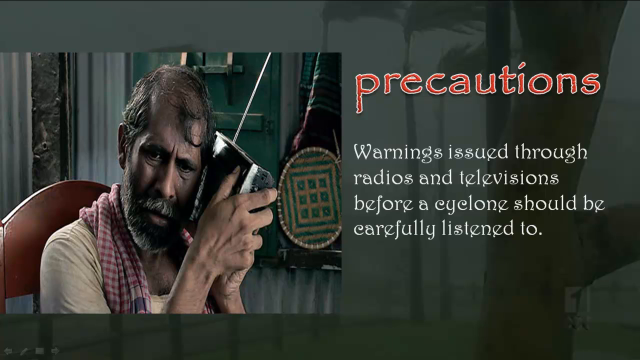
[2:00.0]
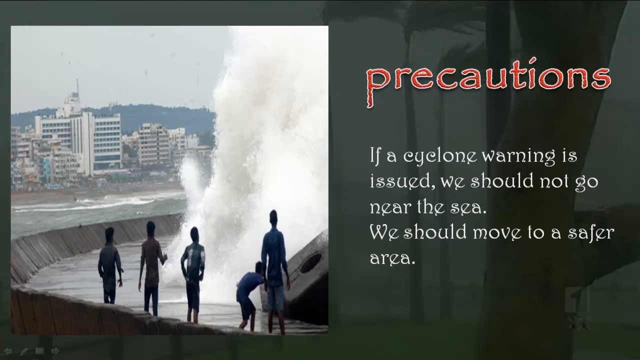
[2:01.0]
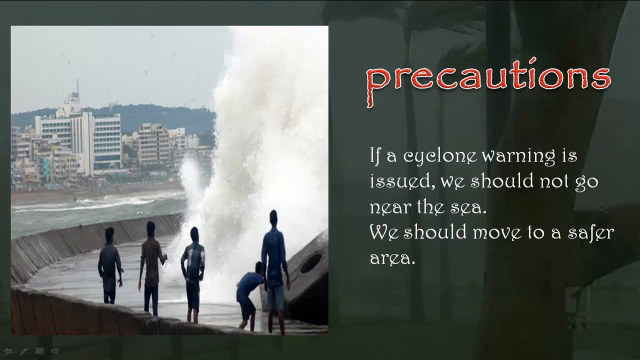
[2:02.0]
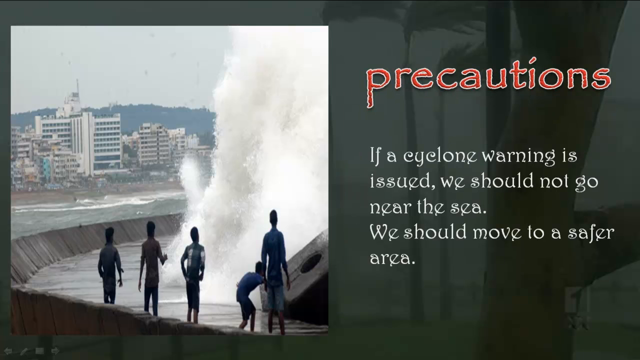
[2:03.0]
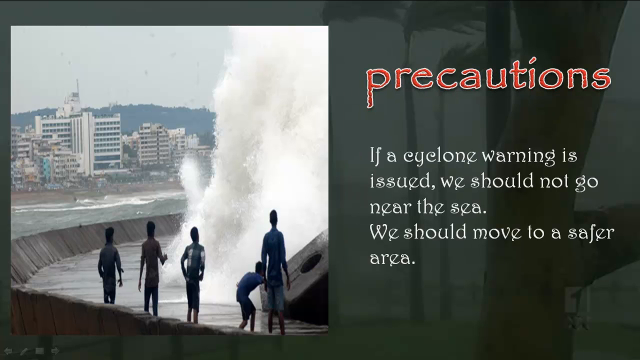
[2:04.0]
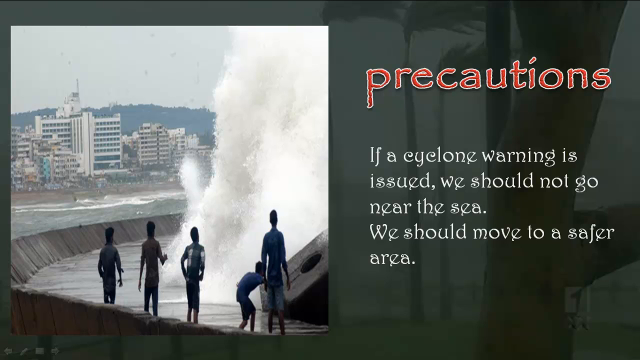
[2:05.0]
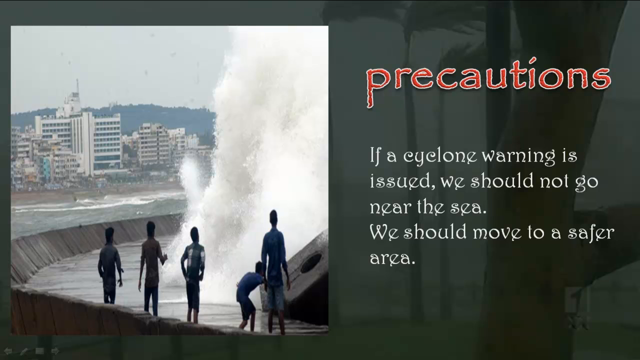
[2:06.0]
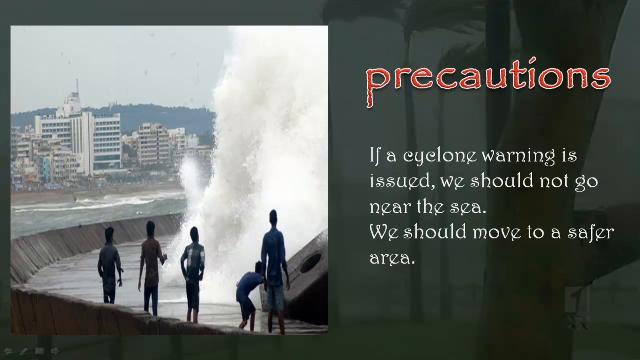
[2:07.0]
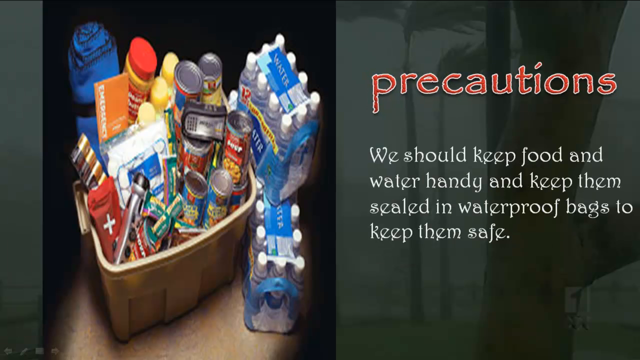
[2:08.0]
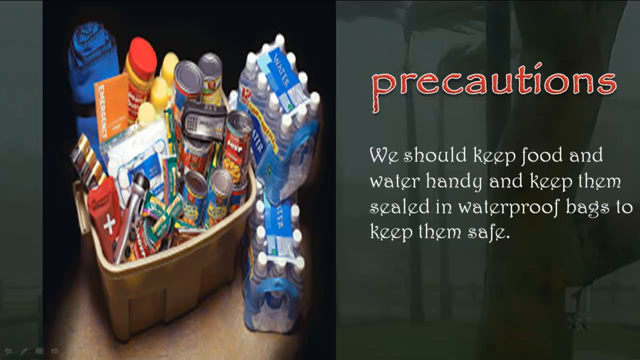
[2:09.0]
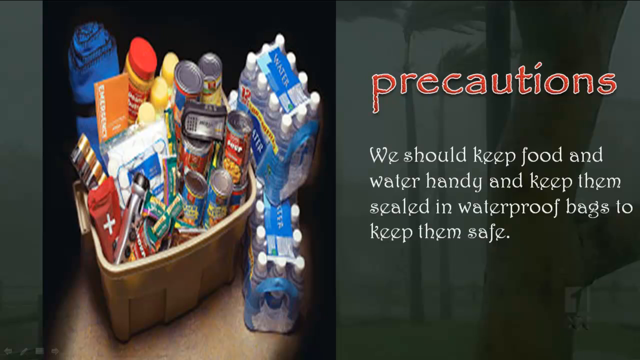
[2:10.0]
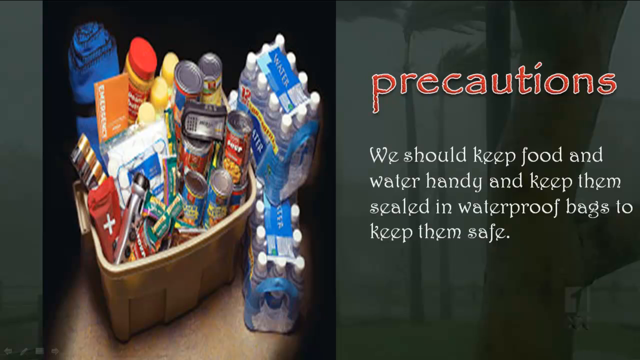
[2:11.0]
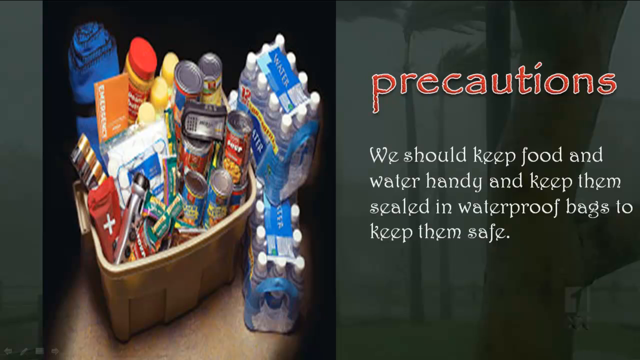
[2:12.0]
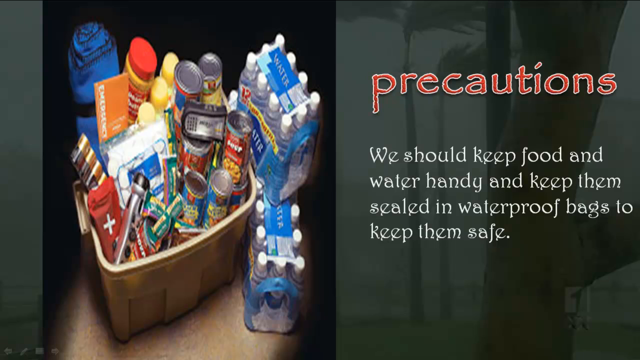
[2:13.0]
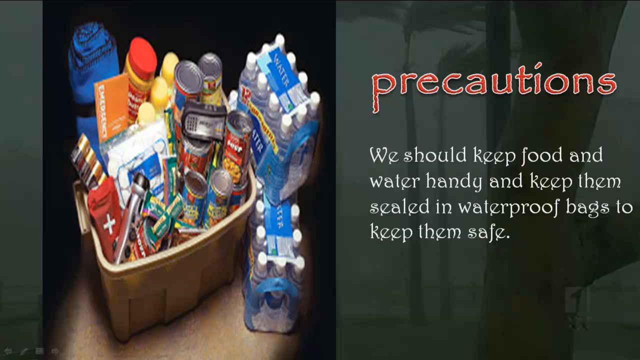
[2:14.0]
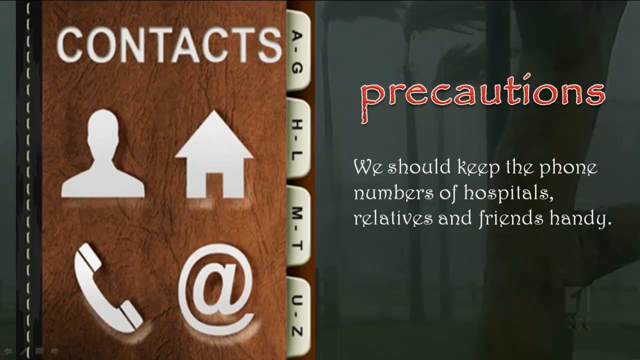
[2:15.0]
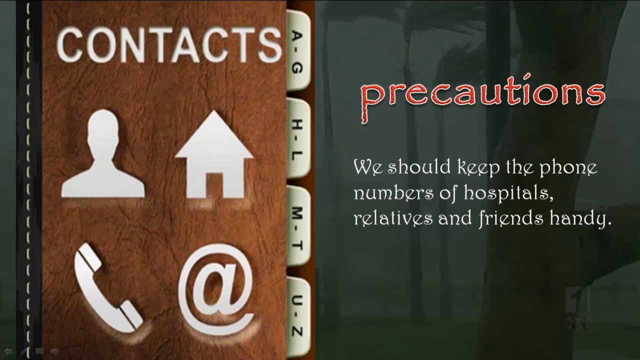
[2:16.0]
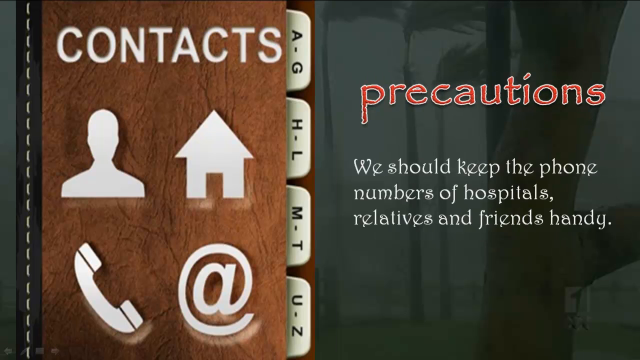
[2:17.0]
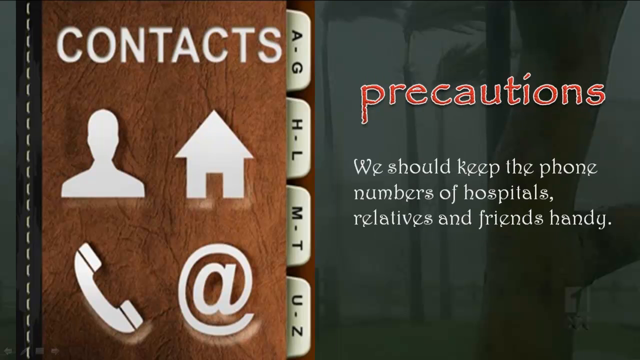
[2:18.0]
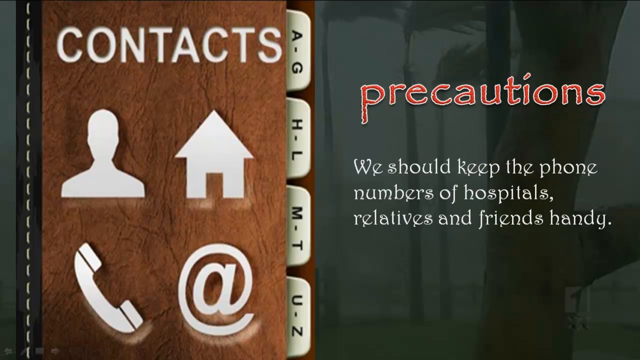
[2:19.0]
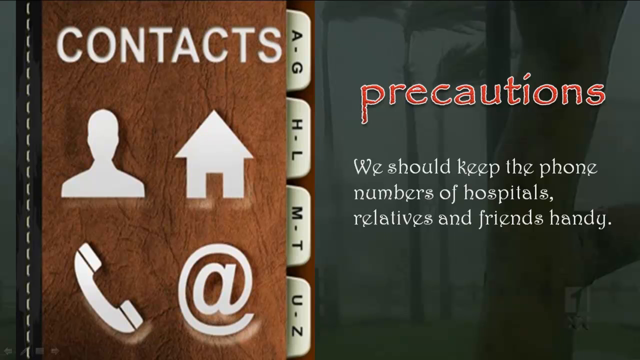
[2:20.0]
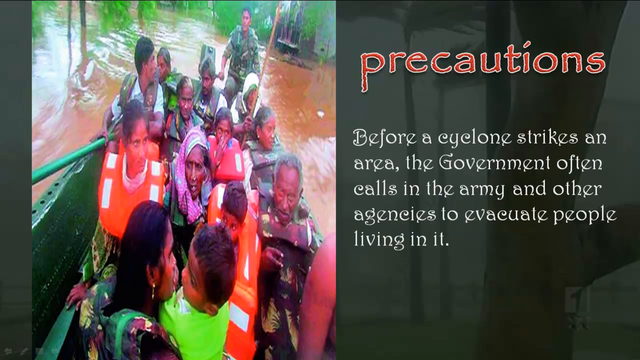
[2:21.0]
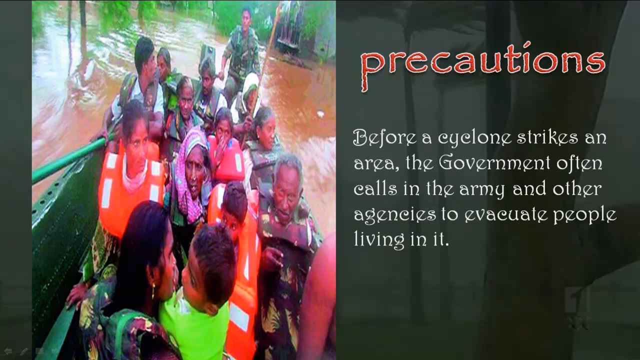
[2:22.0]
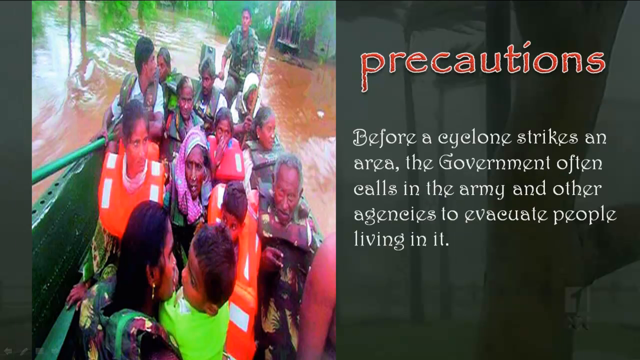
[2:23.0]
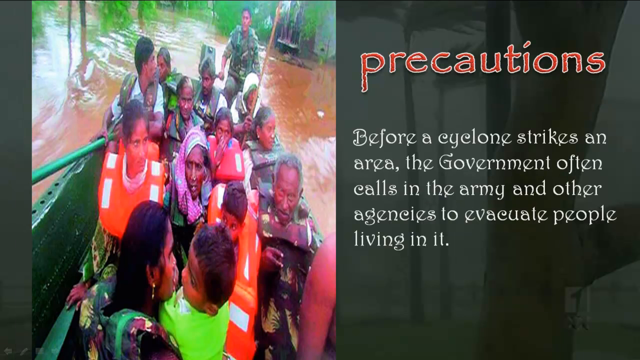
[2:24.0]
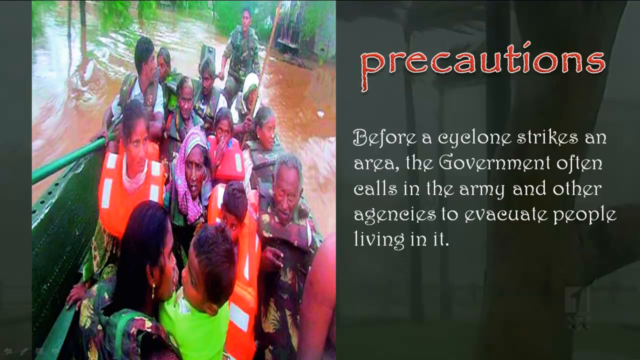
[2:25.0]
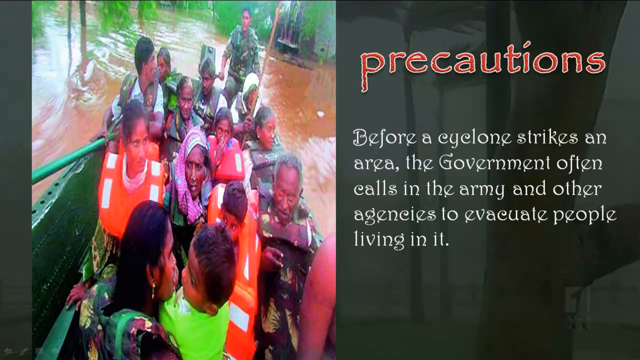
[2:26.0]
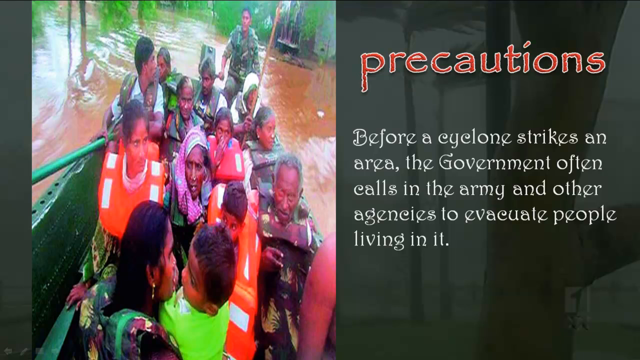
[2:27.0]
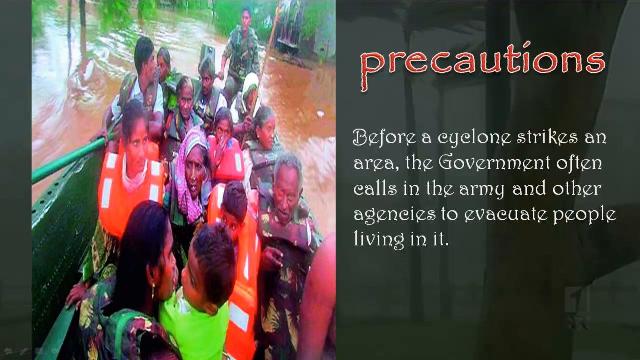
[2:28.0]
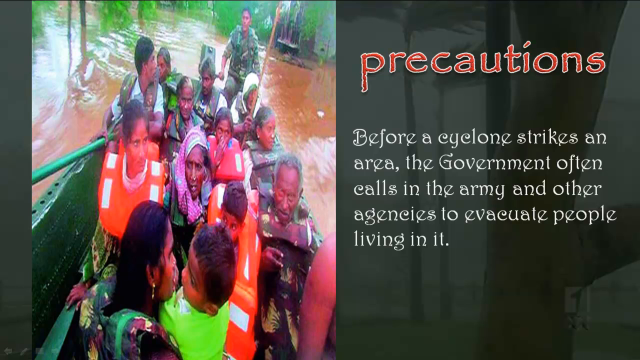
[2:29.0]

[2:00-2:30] A man is shown holding a radio and listening to it, while text on the right says precautions: a "warning issued through radios and television before a cyclone should be carefully listened" to. The next precaution says people should not go near the sea and should go to a safer place, with an image of five people standing close to a big water wave. Another precaution says to keep food and water handy, sealed in packs to keep them safe; on the left are some food and bottled water. The next precaution is to keep the phone numbers of friends and relatives handy, illustrated with images of a man, a house and a telephone. Another precaution says that before a cyclone strikes an area, the government often calls in the army and other agencies to evacuate the people living there; on the left, people are evacuating the area, all wearing vests and riding on a boat. The last precaution says relief camps are often set up to provide food, water and shelter to people displaced by a cyclone, and the camps are shown.